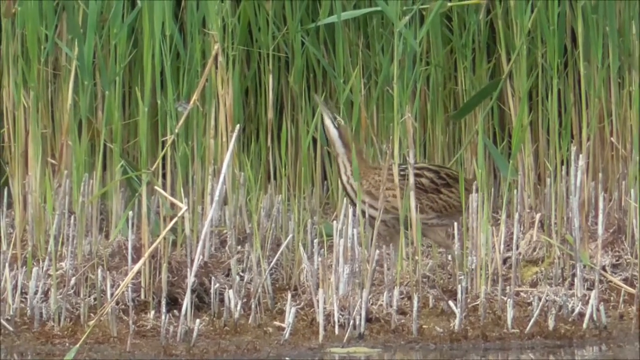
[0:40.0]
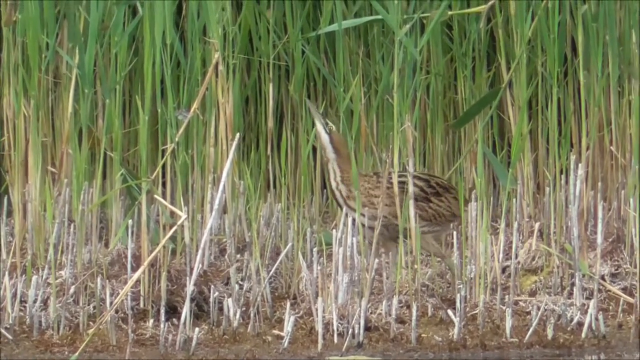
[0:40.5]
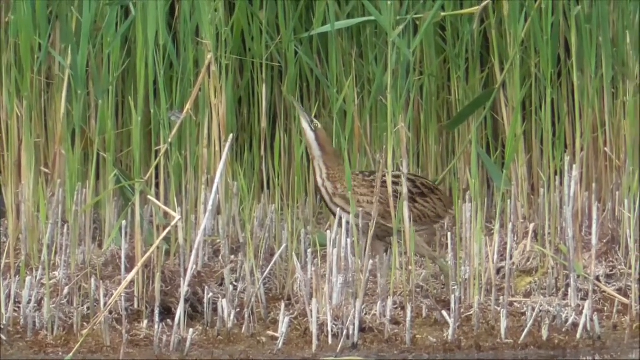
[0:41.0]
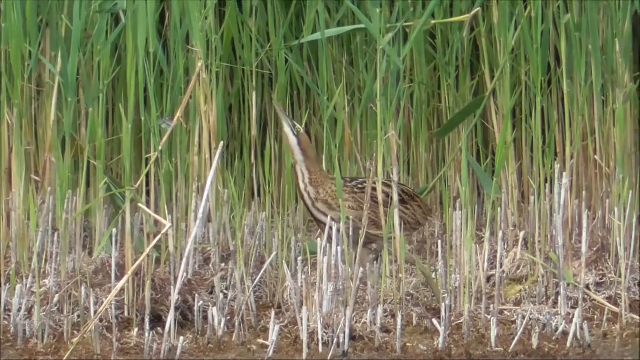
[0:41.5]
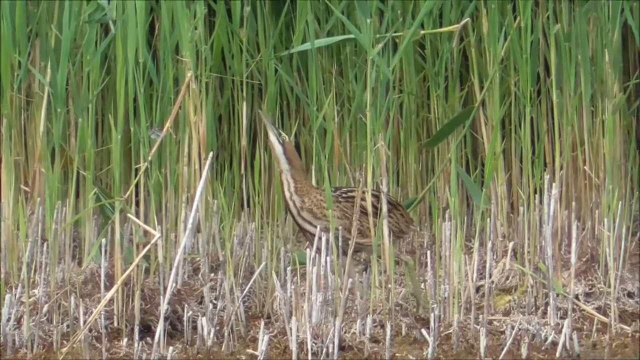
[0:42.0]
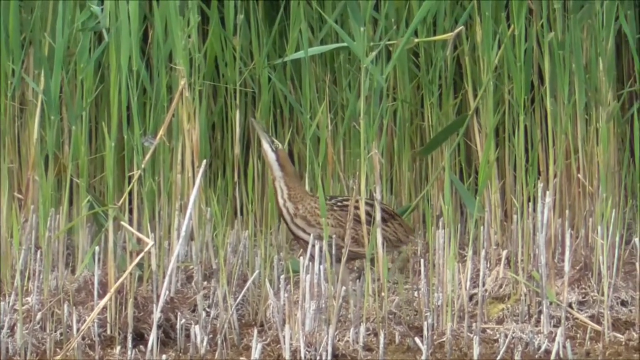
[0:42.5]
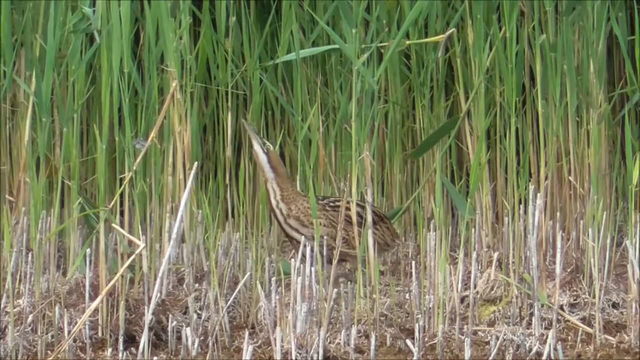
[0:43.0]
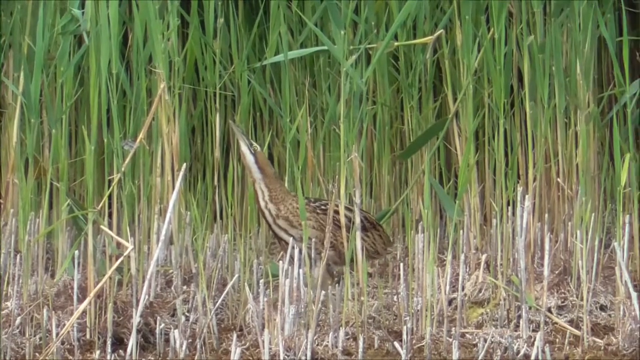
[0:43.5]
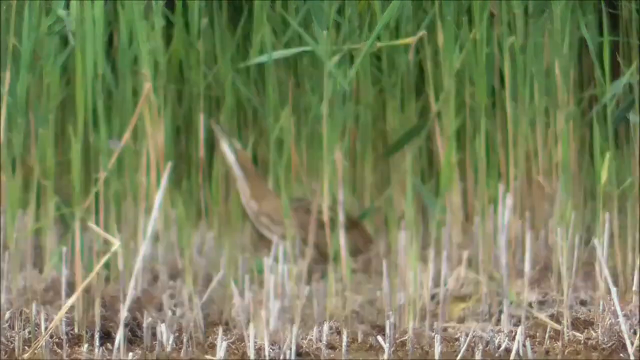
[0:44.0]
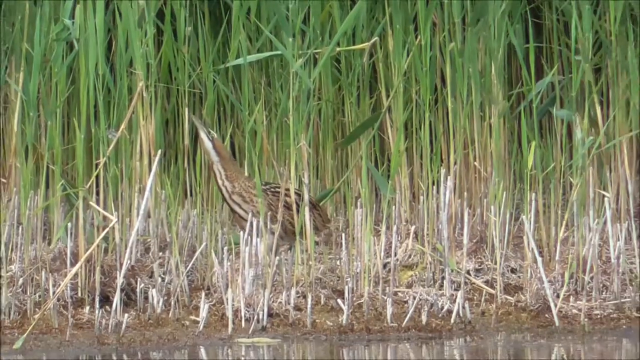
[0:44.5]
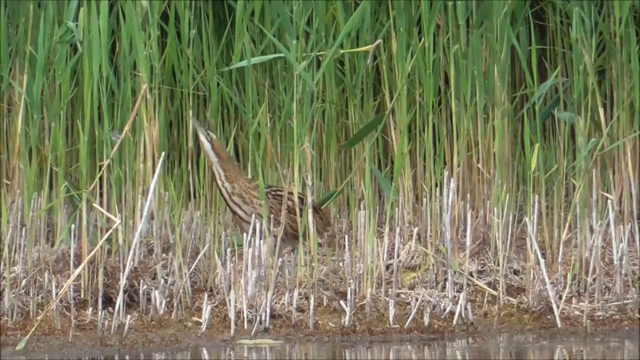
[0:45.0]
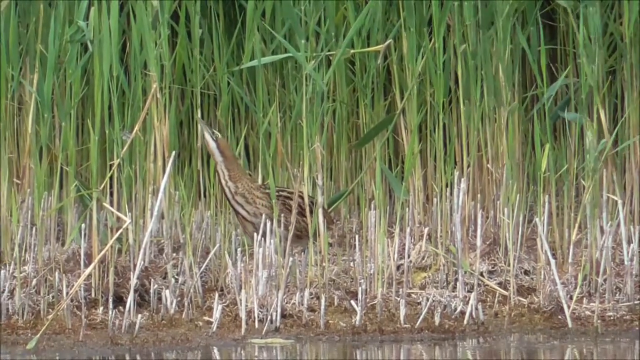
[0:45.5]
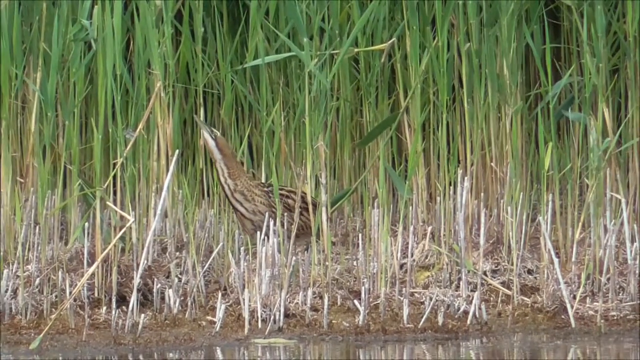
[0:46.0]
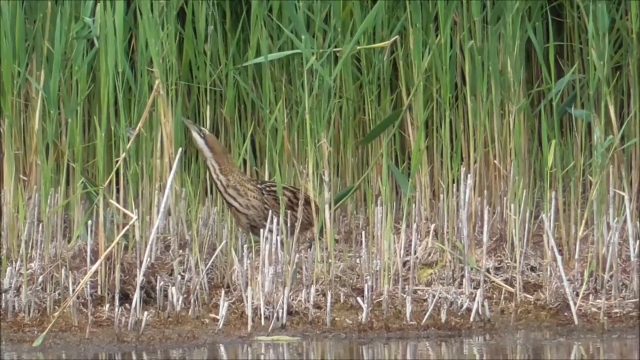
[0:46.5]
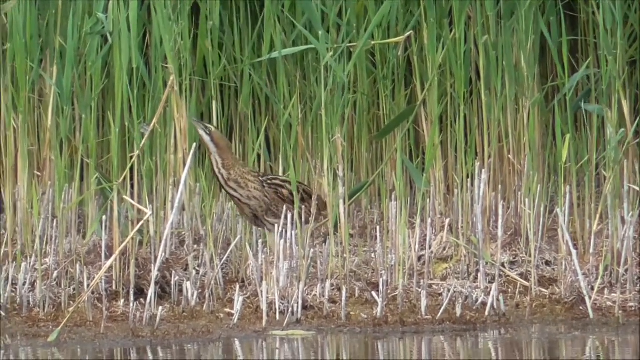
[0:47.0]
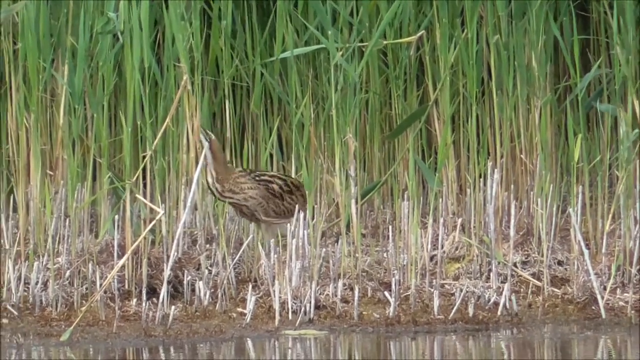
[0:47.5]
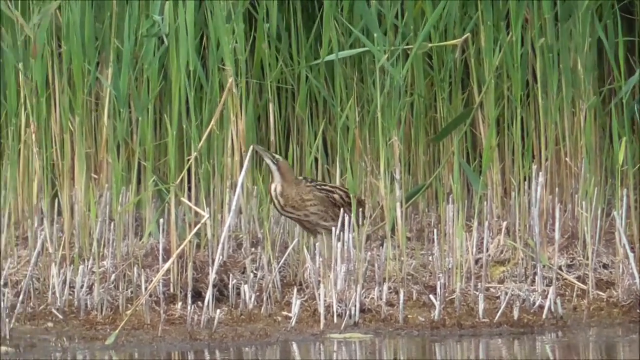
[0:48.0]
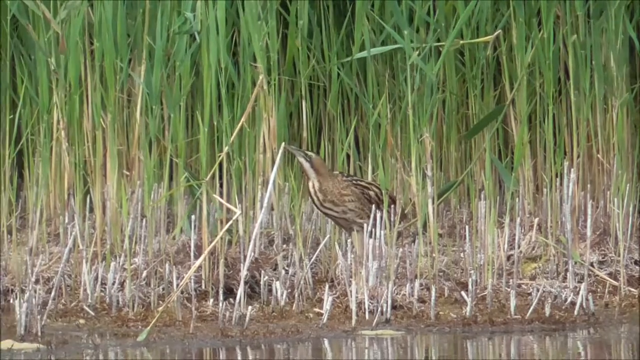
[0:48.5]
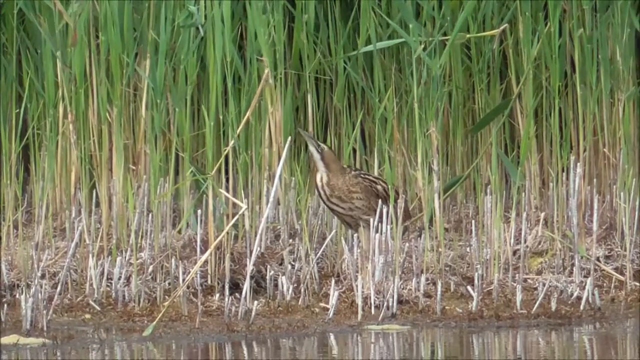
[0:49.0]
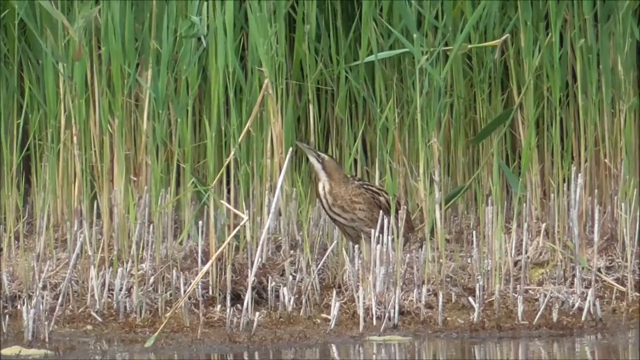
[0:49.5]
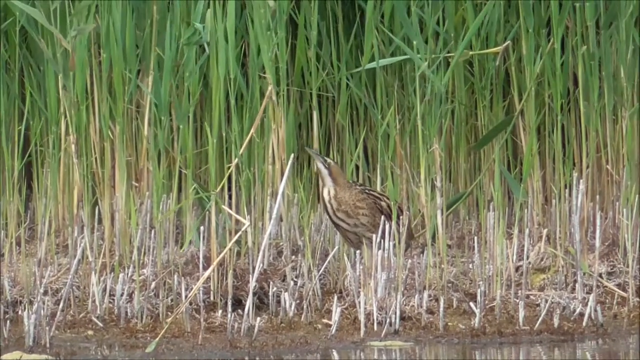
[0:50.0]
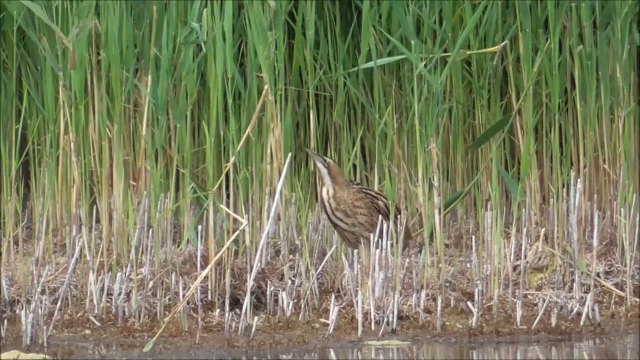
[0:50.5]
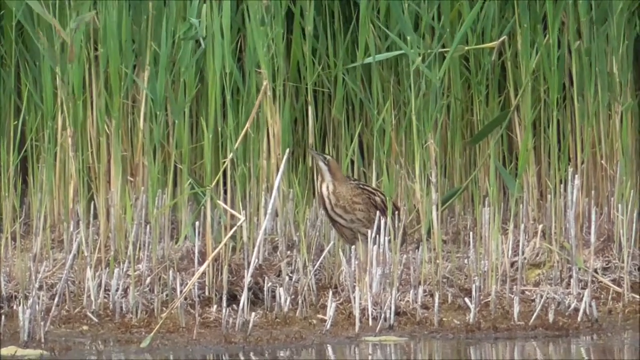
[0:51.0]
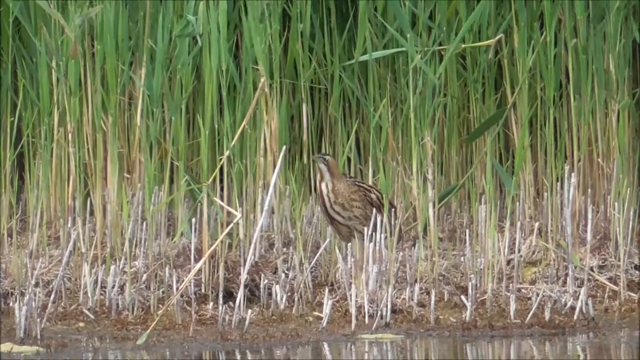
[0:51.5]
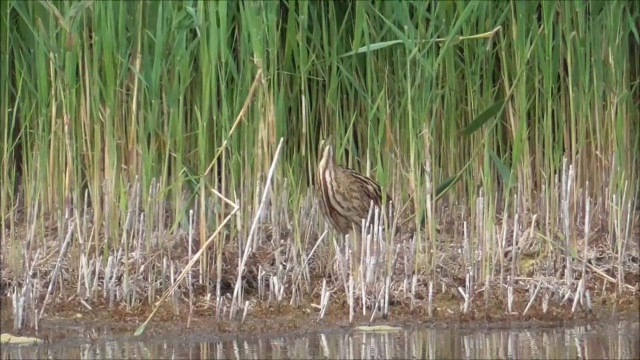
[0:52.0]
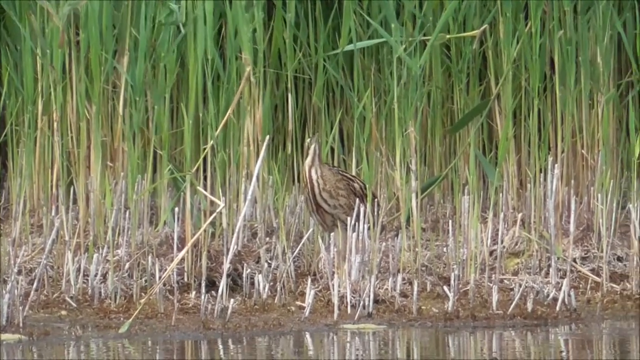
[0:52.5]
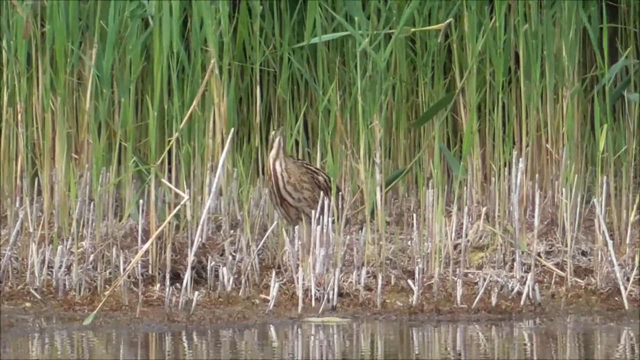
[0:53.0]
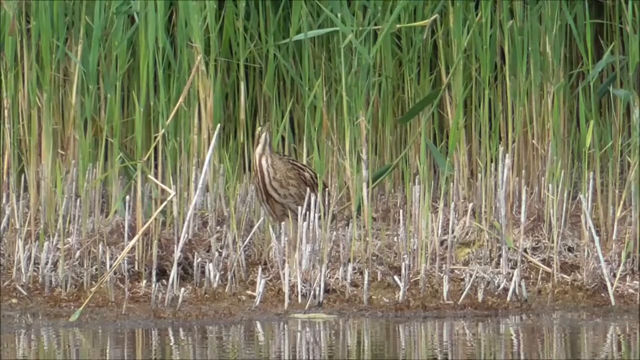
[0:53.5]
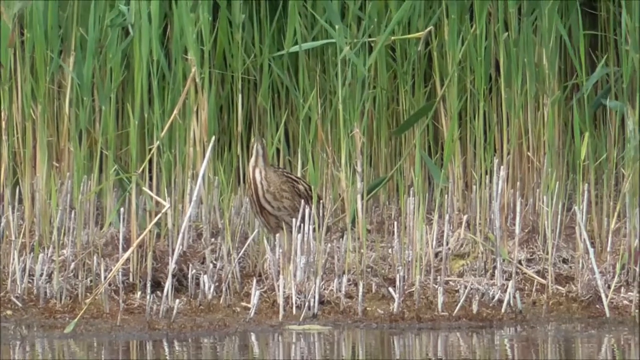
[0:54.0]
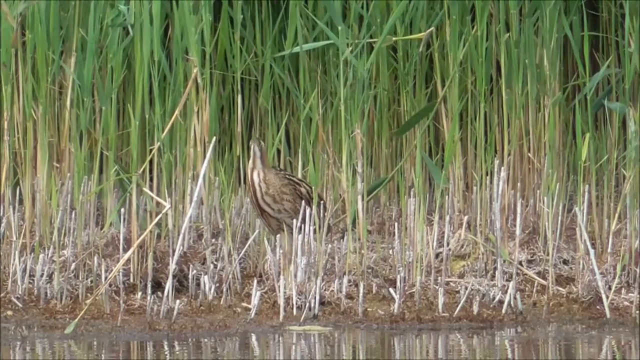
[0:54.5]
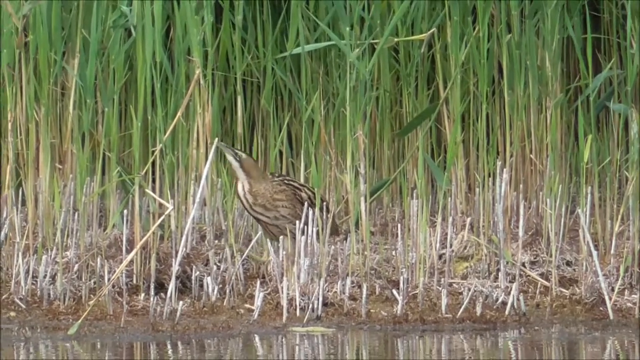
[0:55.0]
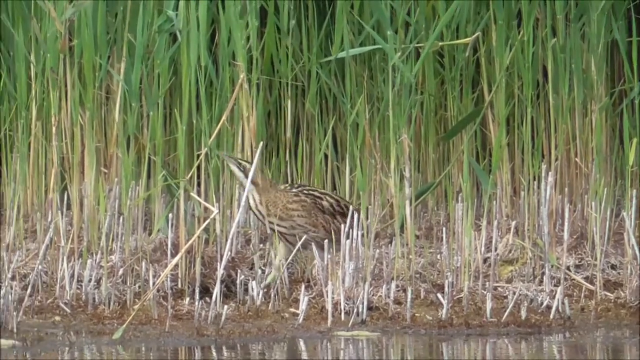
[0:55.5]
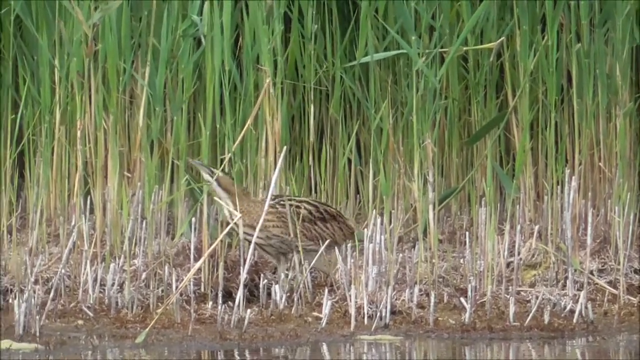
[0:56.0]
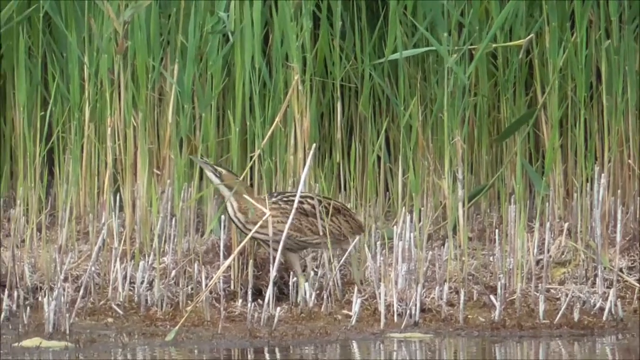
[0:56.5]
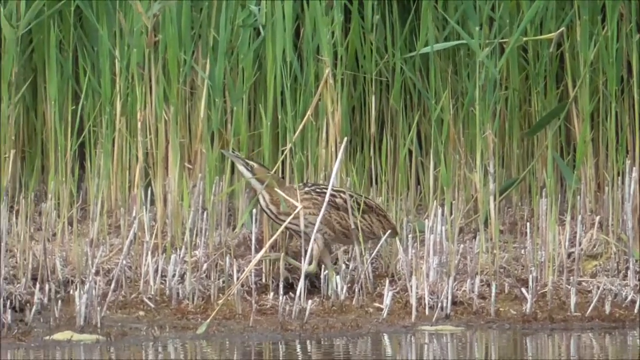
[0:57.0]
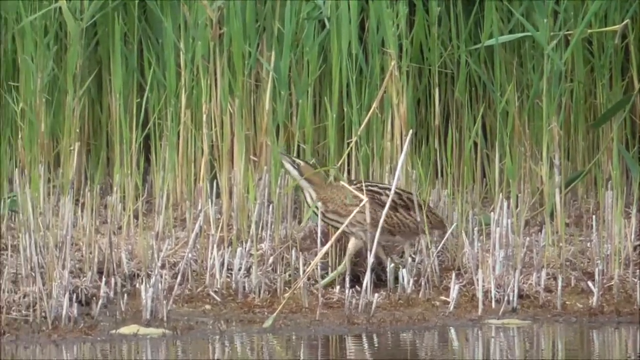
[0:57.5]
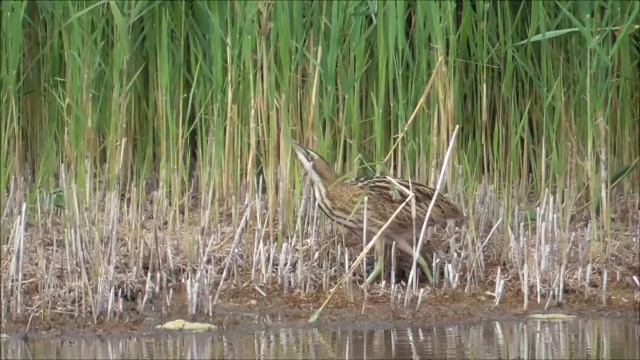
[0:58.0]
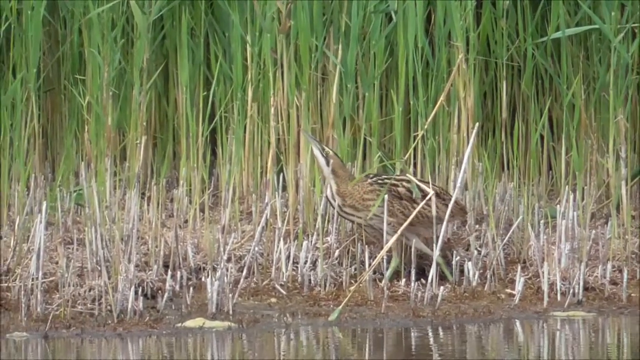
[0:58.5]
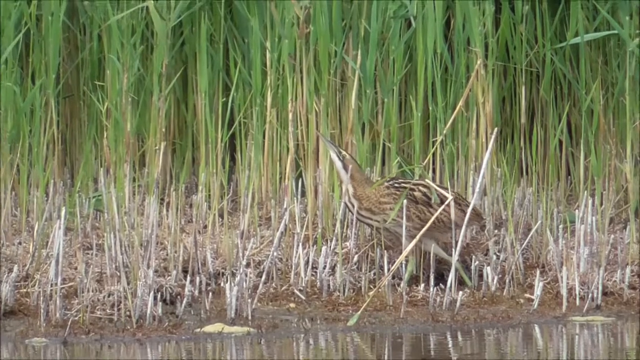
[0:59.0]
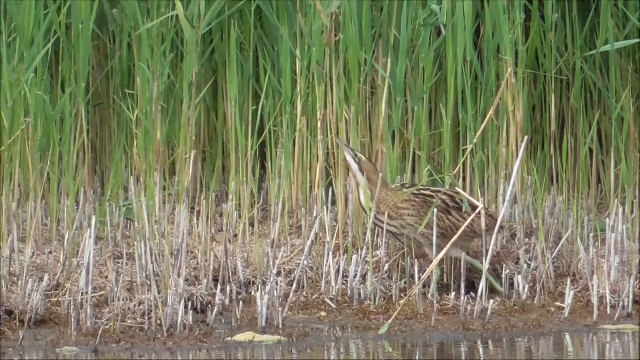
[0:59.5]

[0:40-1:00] The camera is zoomed in on one of the birds. Its head is pointed upward, not completely but at a slight angle, and it has a pointy beak. Almost a white stripe runs from near its beak down toward its stomach and kind of splits into two stripes further down, while the rest of its feathers are different hues of brown. The bird almost looks like it tried to get a bug and then kind of jumped back as if it failed, and its neck gets shorter as it pushes its head closer into its body. Its head then turns toward the person filming and moves around, after which it turns back toward the left and starts walking left again, its head sort of pointed upward as if looking for a bug in the air to eat. The densely packed plants near it have a lot of white stalks that turn green higher up, and many of these white stalks near the water look like the green part has been broken off.